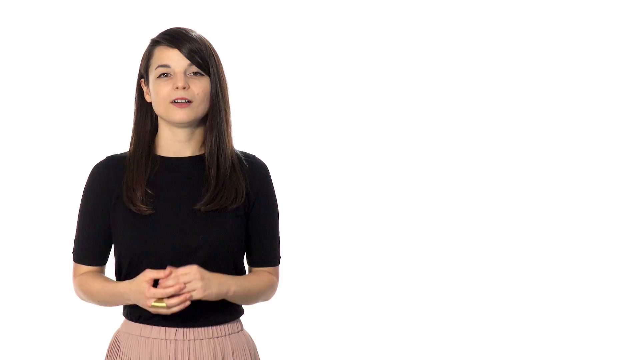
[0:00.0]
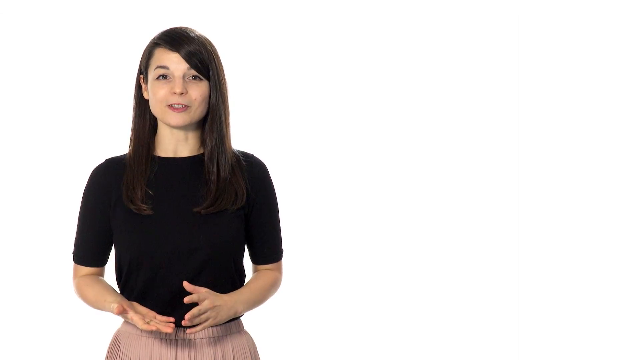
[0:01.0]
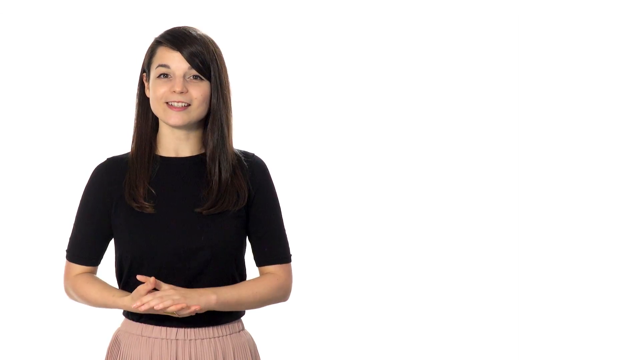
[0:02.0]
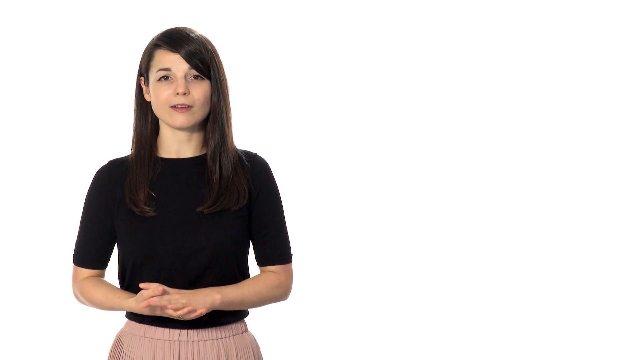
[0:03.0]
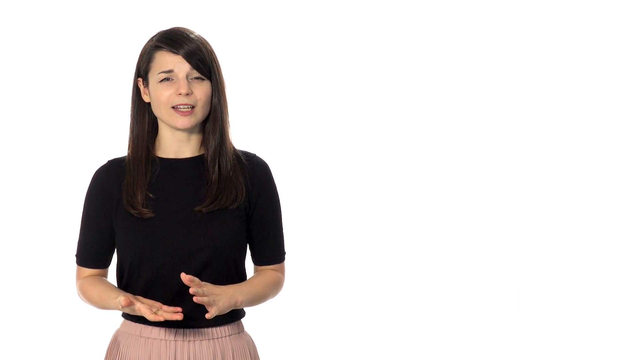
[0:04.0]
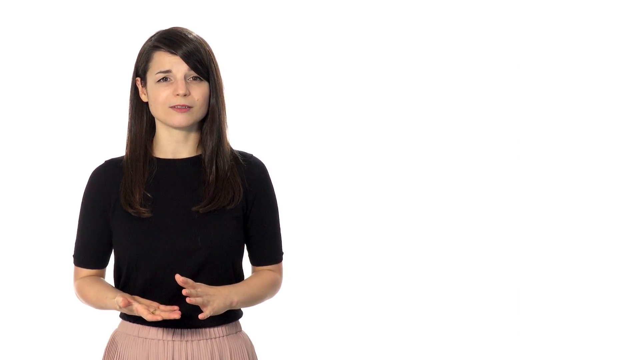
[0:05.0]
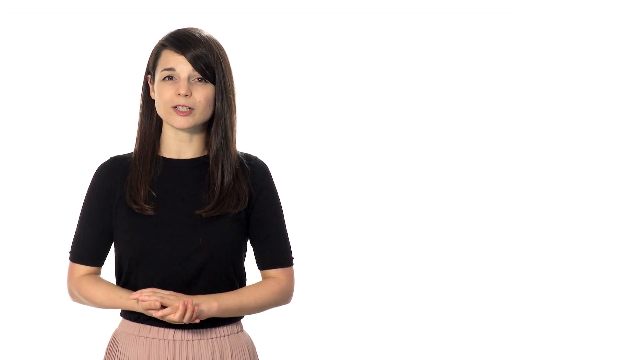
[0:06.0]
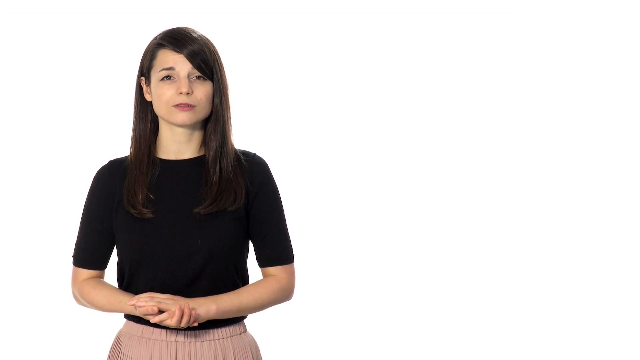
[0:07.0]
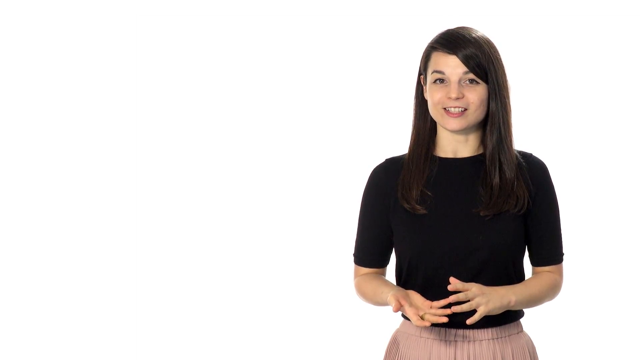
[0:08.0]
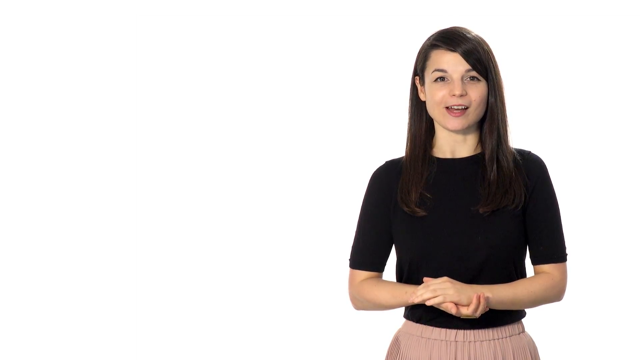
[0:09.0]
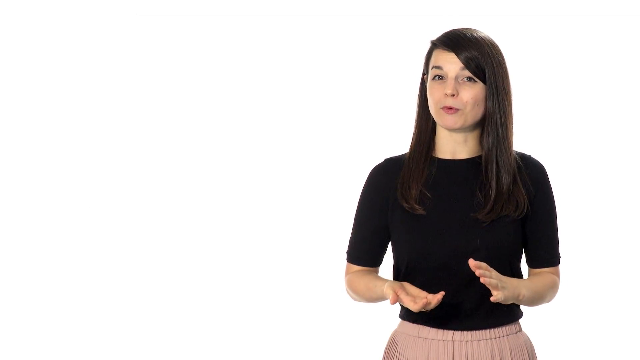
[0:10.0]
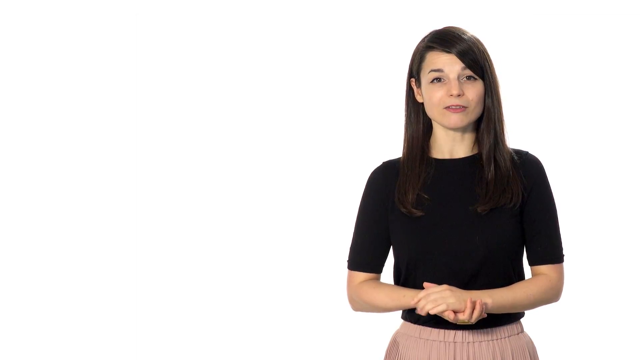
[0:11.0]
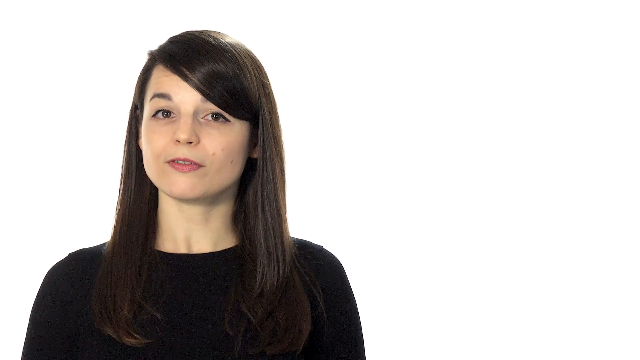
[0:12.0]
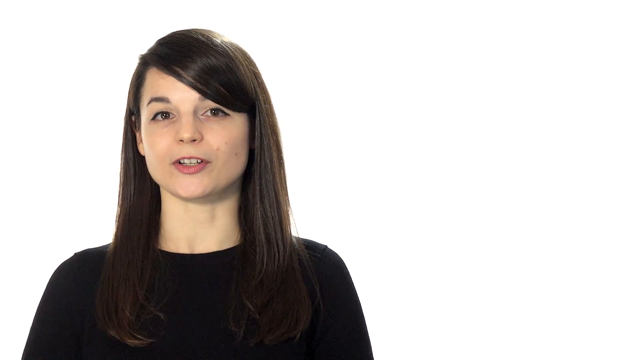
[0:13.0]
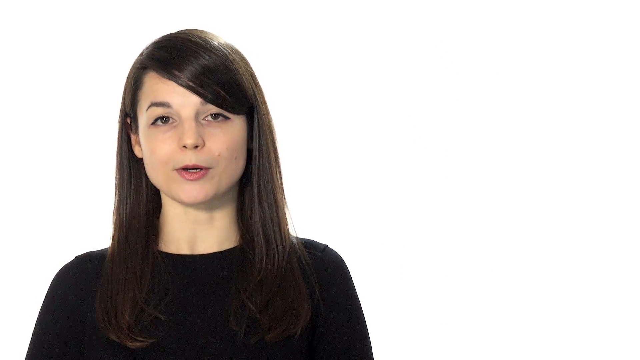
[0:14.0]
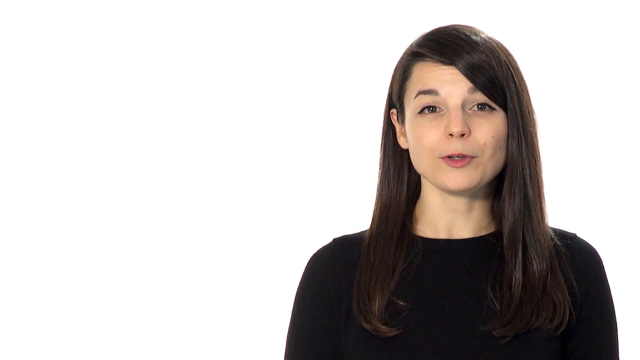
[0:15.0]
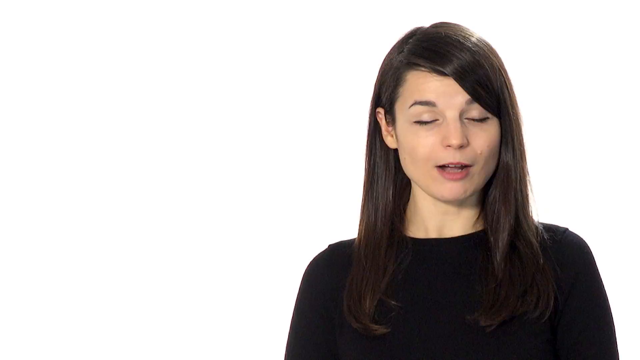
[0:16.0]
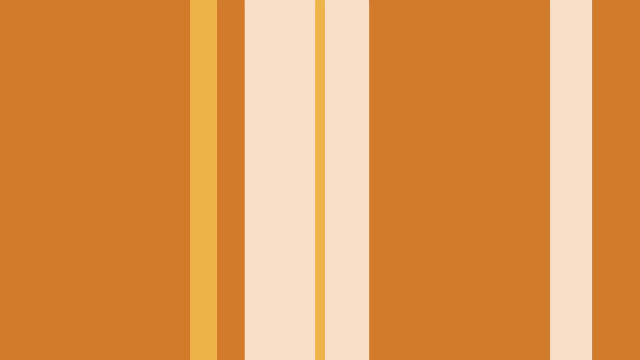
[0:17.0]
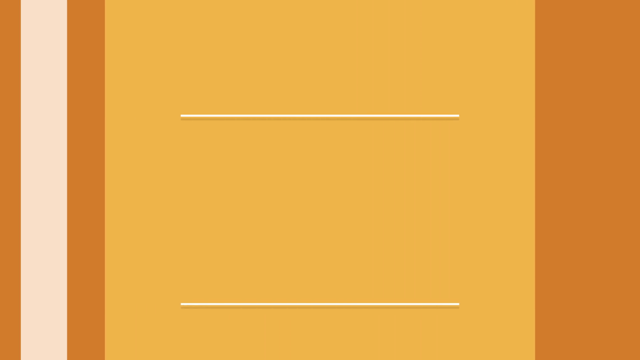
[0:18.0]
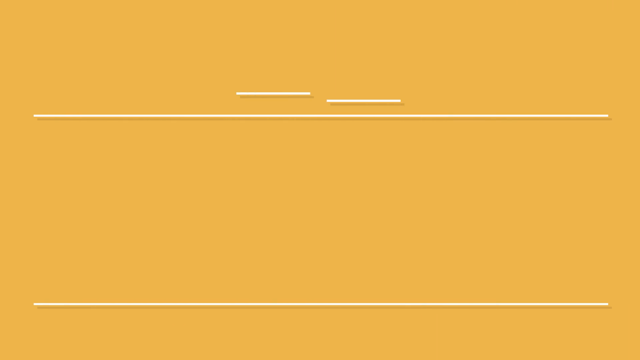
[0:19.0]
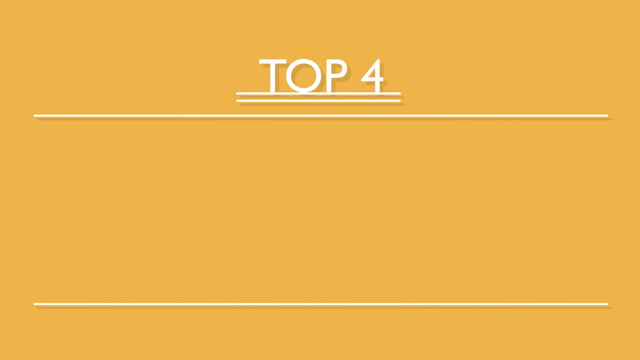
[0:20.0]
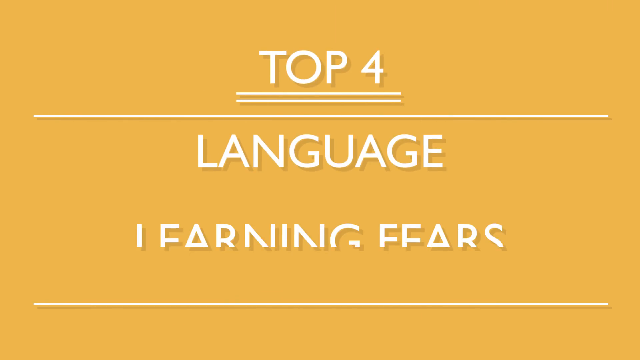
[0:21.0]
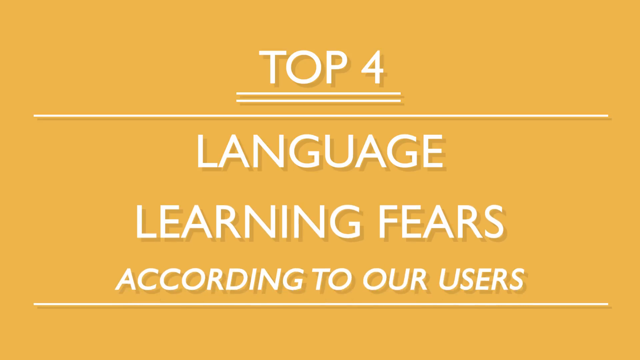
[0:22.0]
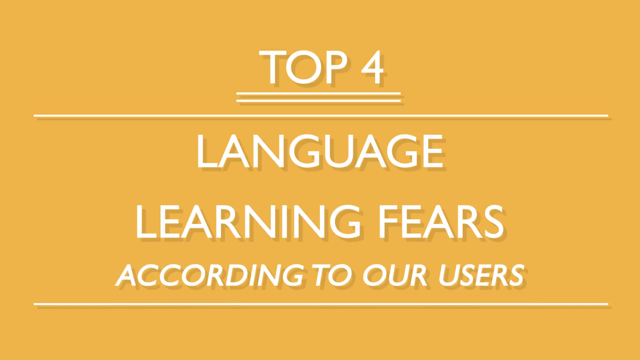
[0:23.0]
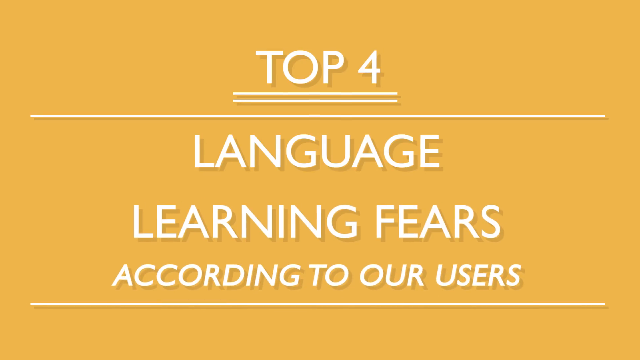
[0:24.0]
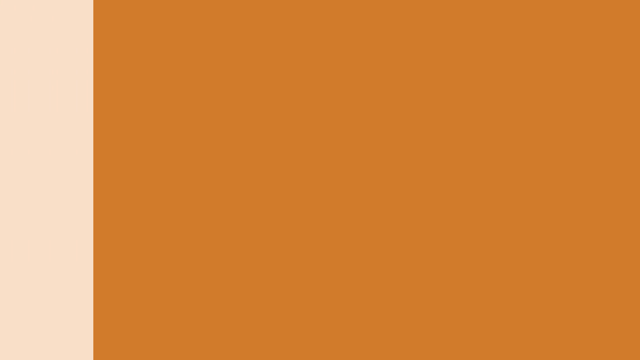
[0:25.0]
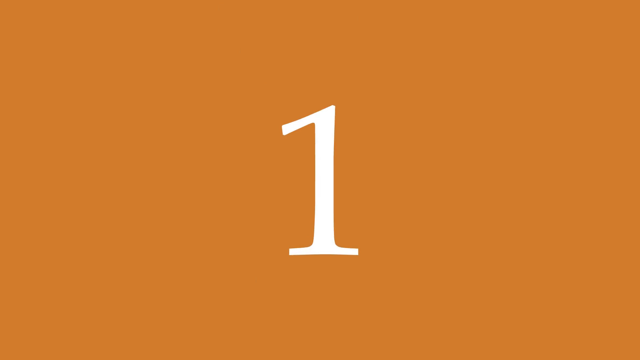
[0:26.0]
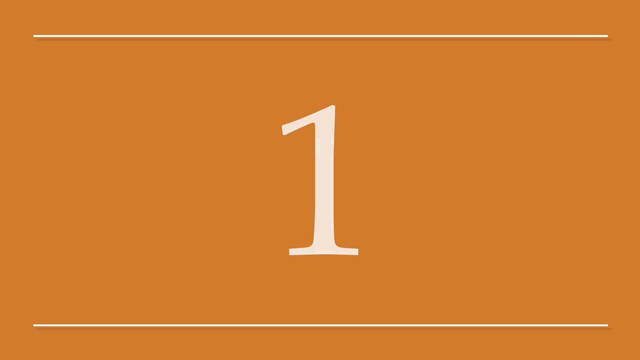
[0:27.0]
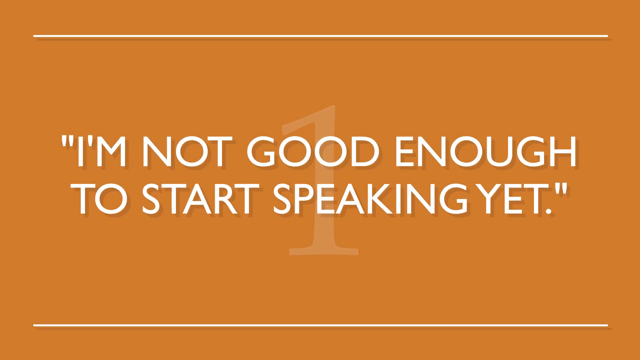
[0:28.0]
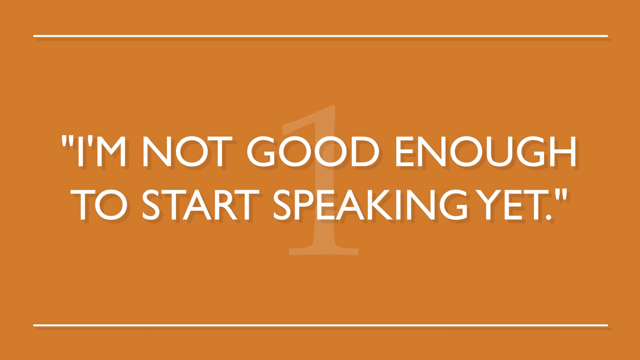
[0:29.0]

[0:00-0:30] A woman of Asian origin with long hair, wearing a black top and brown trousers, appears to be explaining something. She stands in front of a plain white background. The video then moves to text with the heading "top four languages learning fear according to our users", written in bold white with "top four" underlined, on a yellow background, in a very large font.